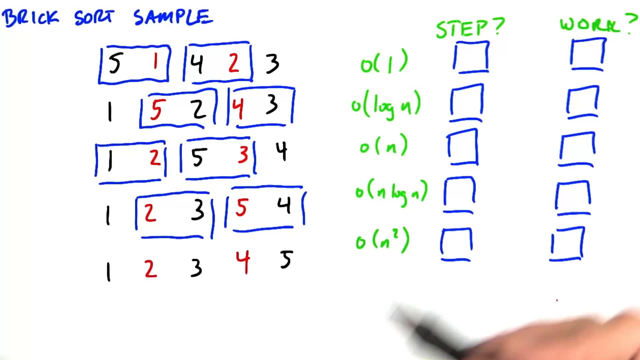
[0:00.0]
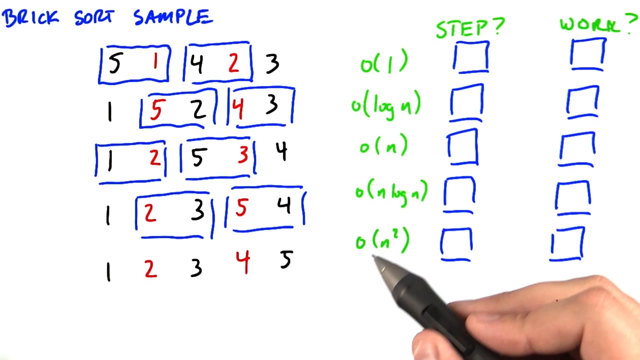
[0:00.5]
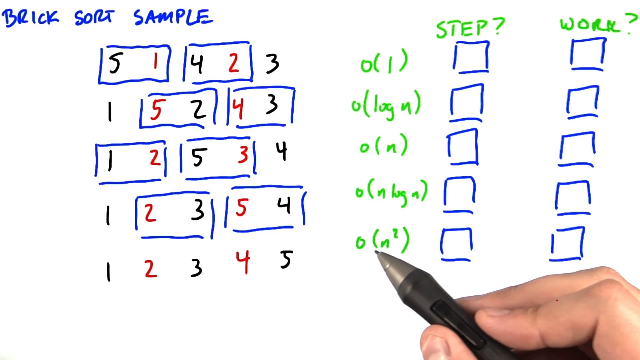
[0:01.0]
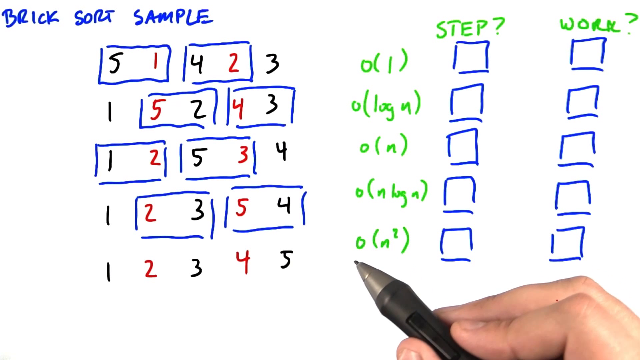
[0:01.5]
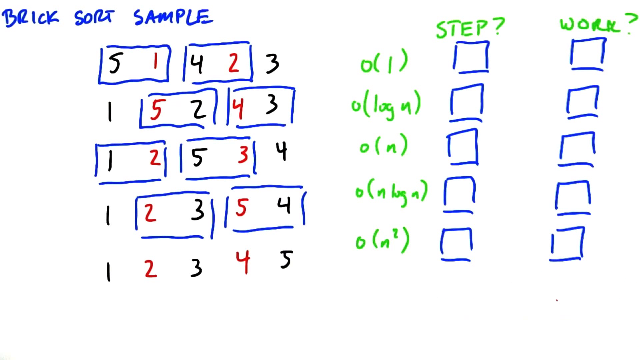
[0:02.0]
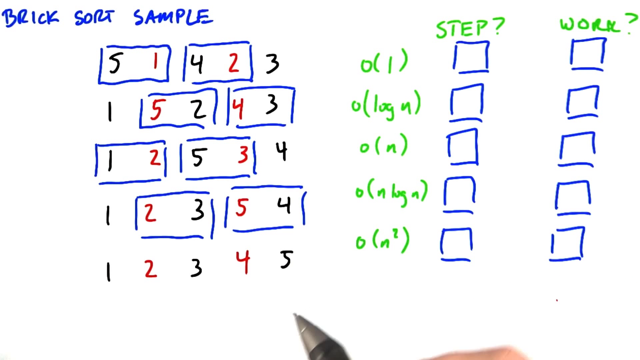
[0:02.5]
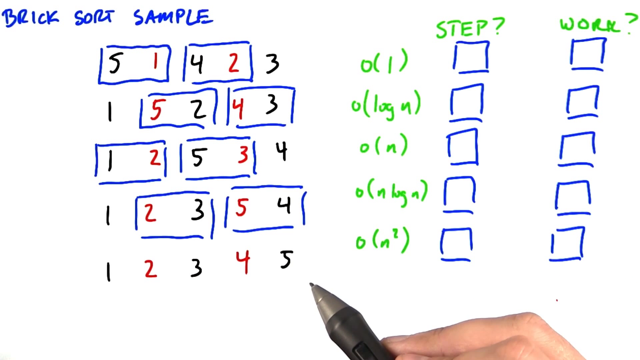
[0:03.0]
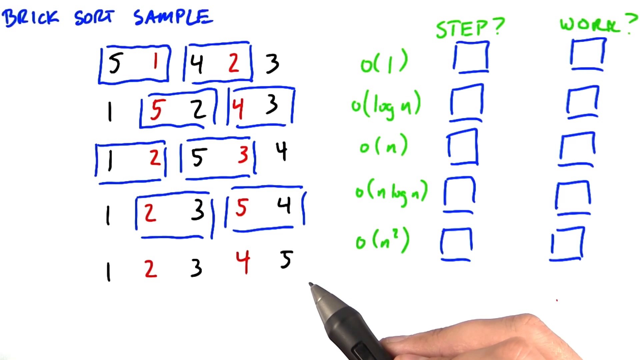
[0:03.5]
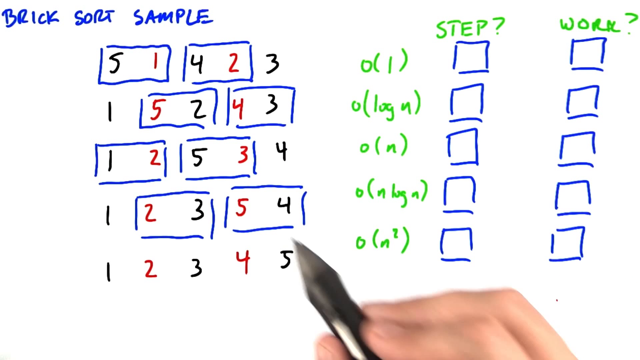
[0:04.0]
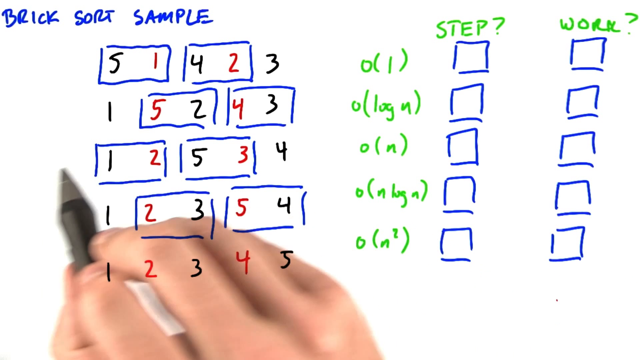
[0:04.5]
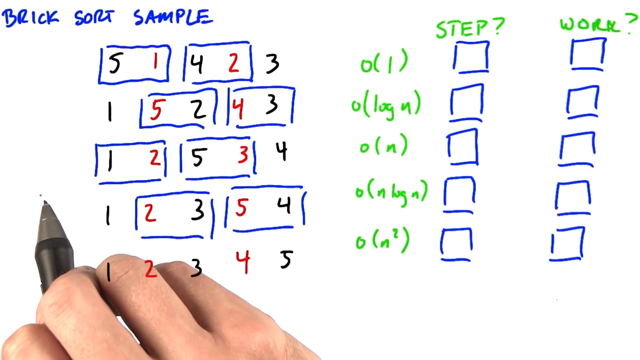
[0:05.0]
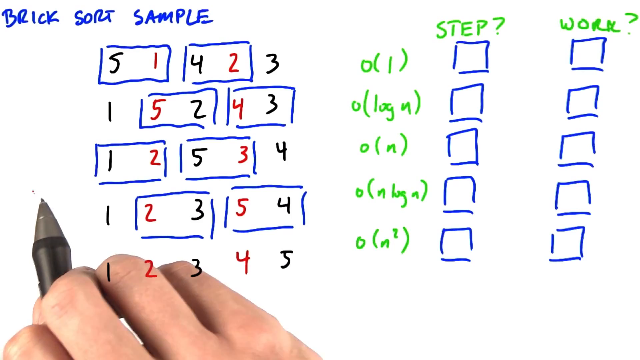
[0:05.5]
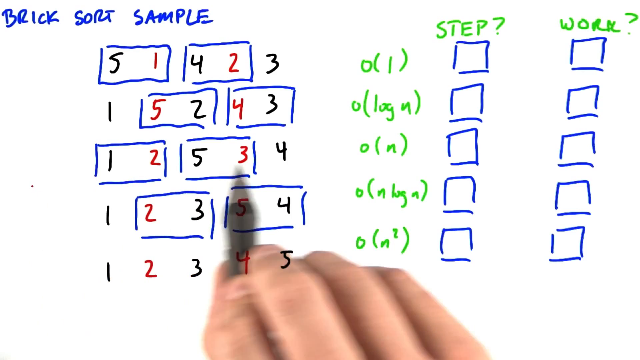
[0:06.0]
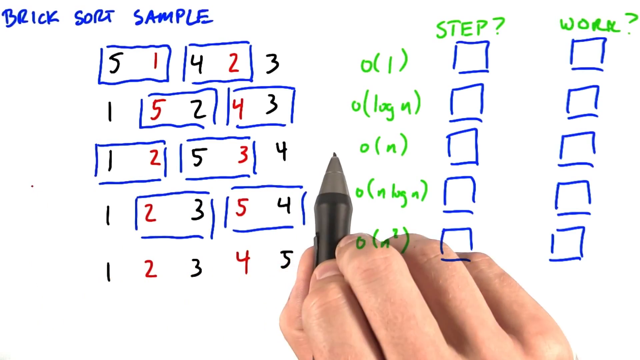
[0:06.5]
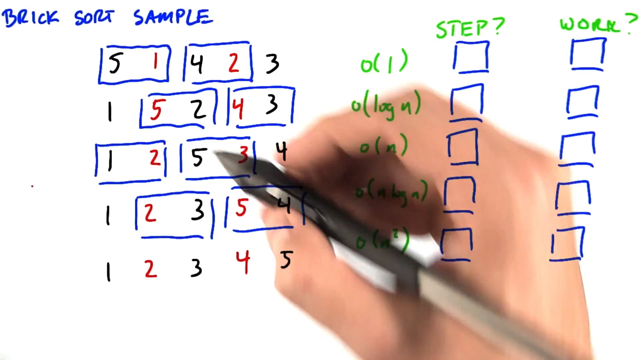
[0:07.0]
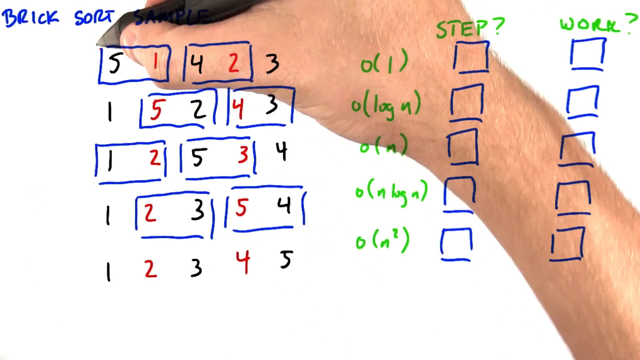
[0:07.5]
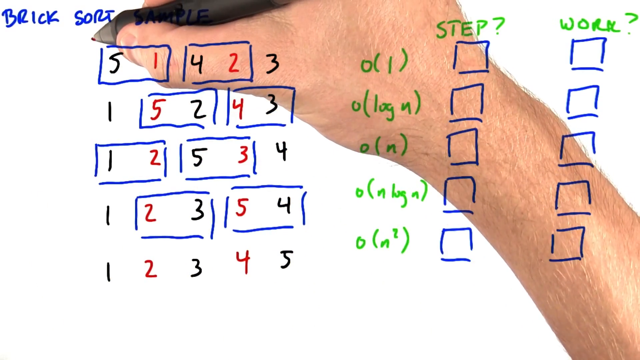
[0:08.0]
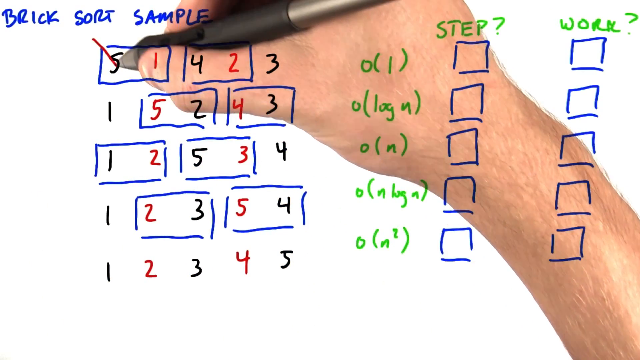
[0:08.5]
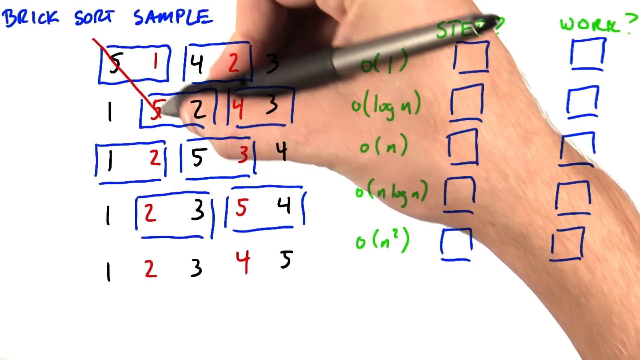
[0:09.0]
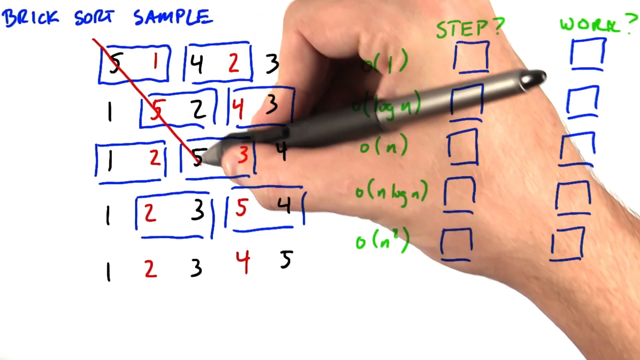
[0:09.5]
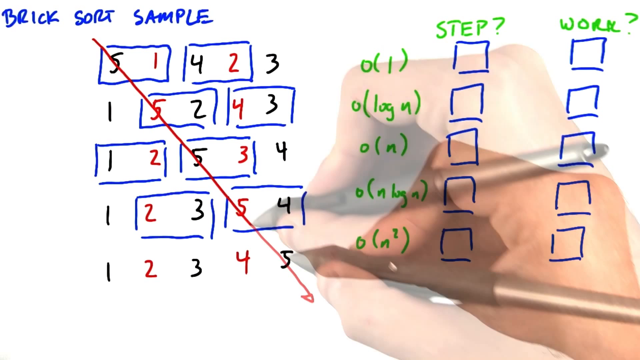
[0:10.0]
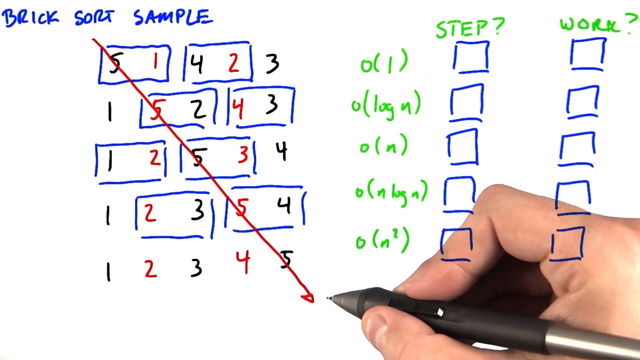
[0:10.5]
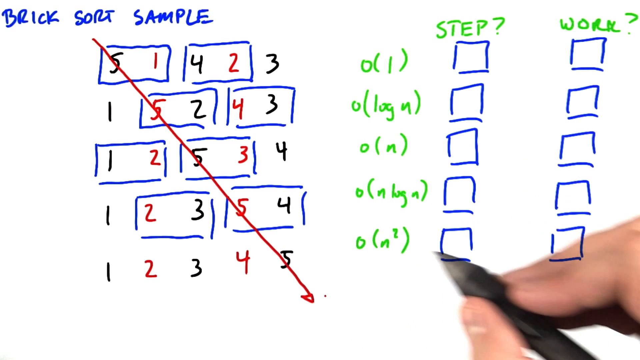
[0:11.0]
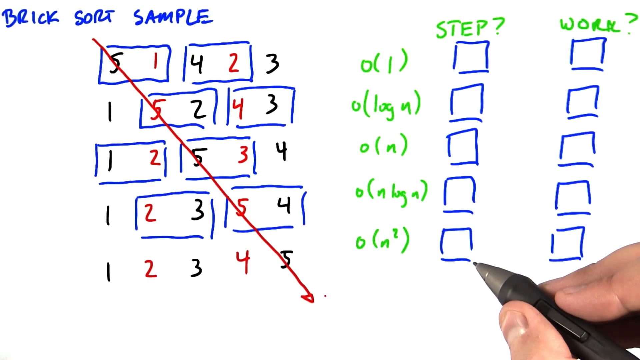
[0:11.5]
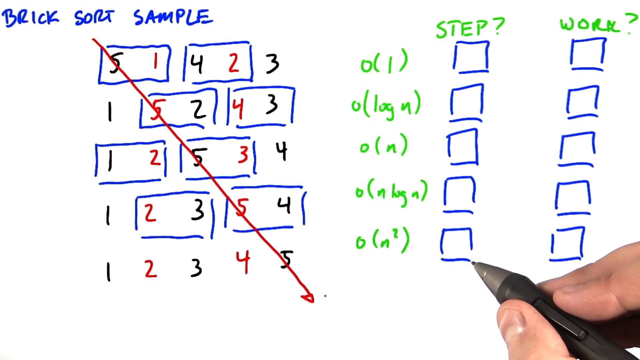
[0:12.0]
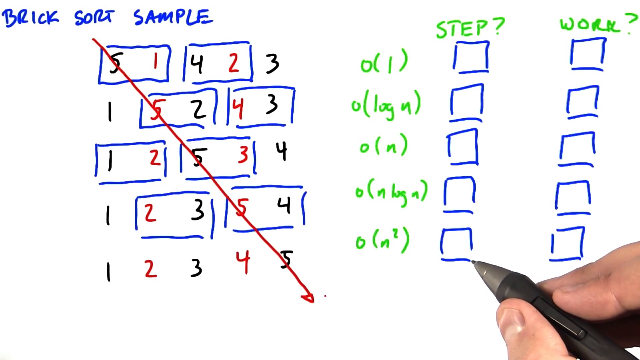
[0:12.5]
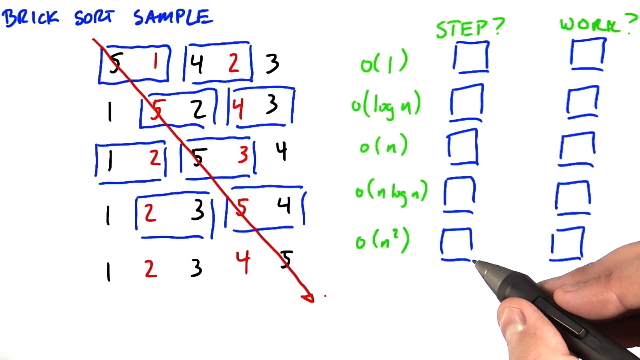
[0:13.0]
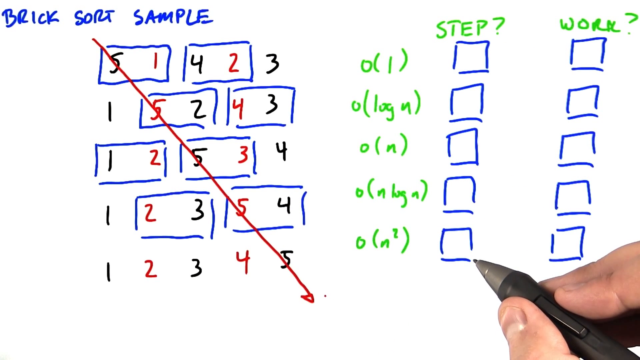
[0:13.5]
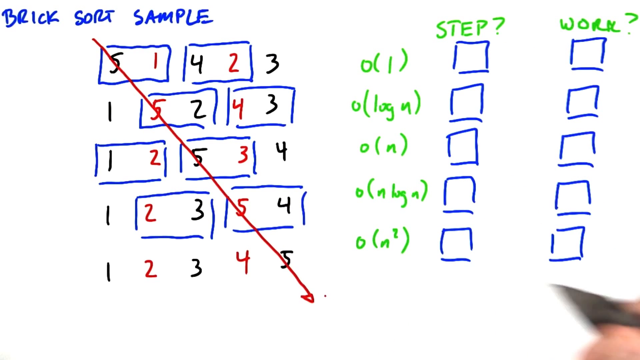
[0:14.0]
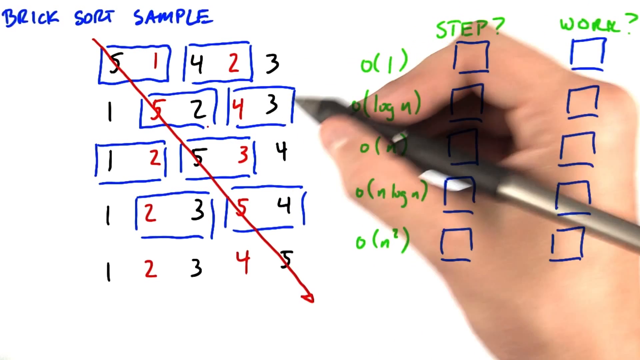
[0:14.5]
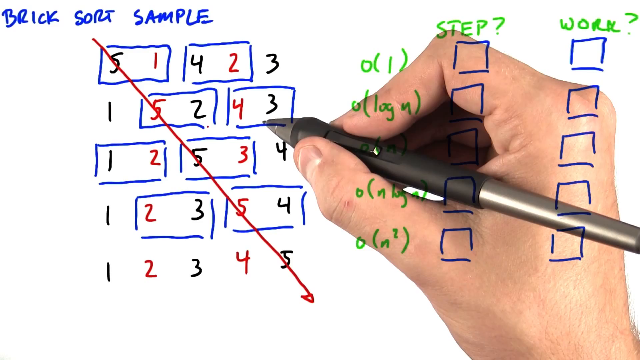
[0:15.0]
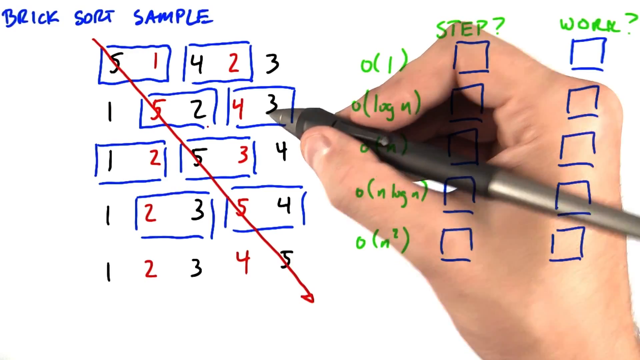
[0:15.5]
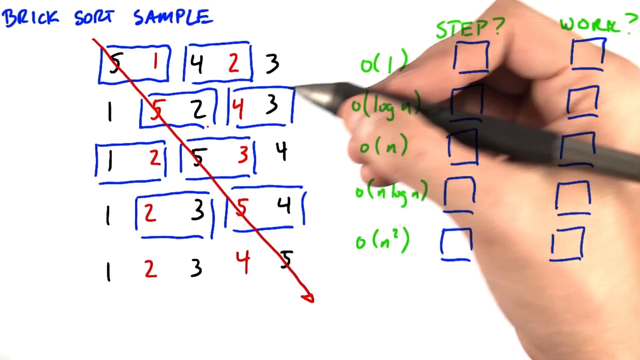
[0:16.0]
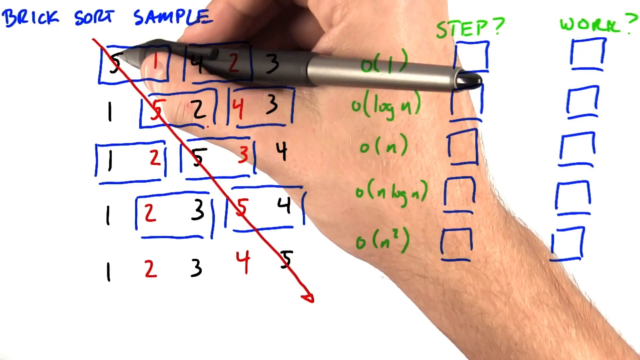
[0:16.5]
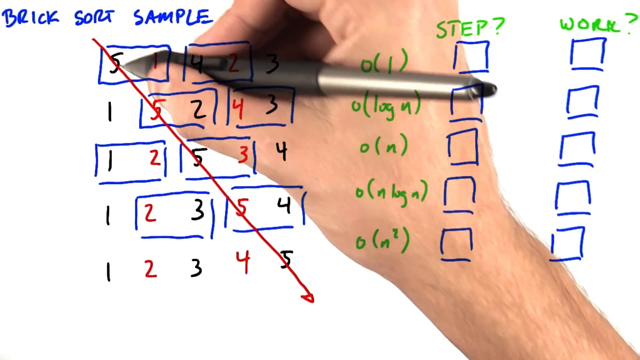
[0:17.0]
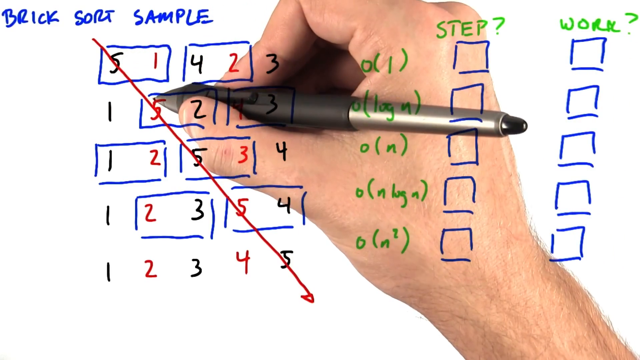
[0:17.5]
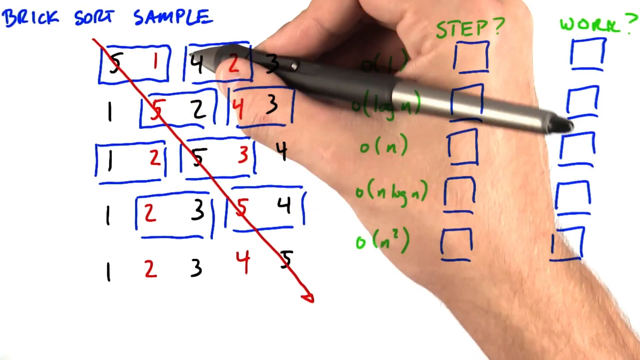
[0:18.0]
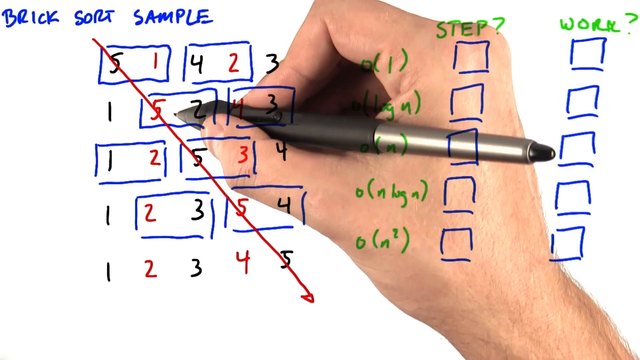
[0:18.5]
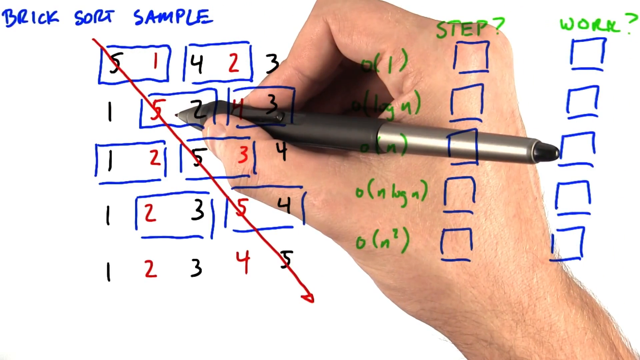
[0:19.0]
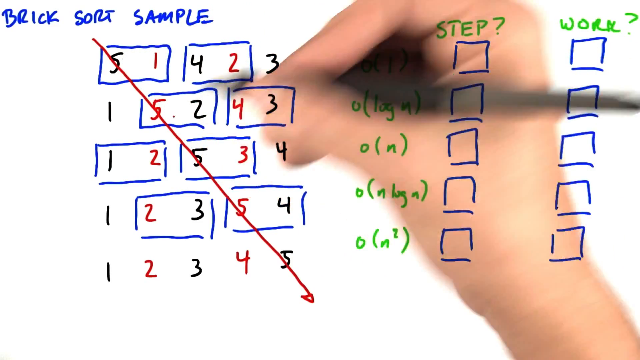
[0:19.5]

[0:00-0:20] The video opens on a white background. On the right side are several blue squares, arranged in two rows of five. Over the far right one is the word "work" with a question mark next to it in green, and at the top of the left five squares is "step" with a question mark, also in green. At the top left, in a bluish color, it says "brick sort sample." Below that are blue rectangles, eight in total, across five rows. In the top row, the numbers 5 and 1 are in the first rectangle, 4 and 2 are in the next one to the right, and the number 3 is to the right of that, outside any rectangle. The second row has the number 1 outside a rectangle, followed by two rectangles to the right: the left one holds 5 and 2, the right one 4 and 3. In the third row, 1 and 2 are in a rectangle, 5 and 3 are in a rectangle to the right, and the number 4 is outside. The fourth row has the number 1 outside a rectangle, then 2 and 3 in a rectangle, and 5 and 4 in another rectangle to the right. The bottom row has no rectangles and reads 1, 2, 3, 4, 5. A white-skinned hand appears at the bottom right holding a black pen with a silverish tip. It points toward a section on the right, then kind of points toward the section on the left. The person then scratches out the rectangle side in red ink, from the top left all the way down to the bottom right row, and then goes over it, kind of hovering over the same line and placing some dots.